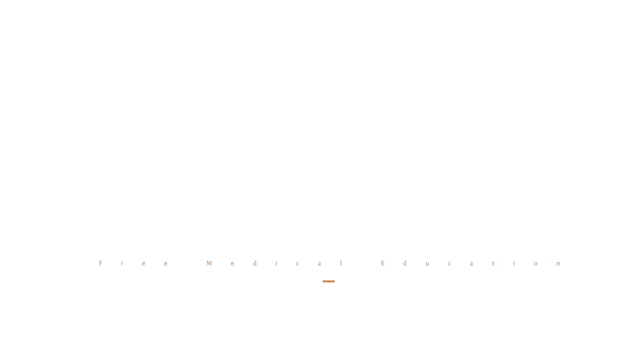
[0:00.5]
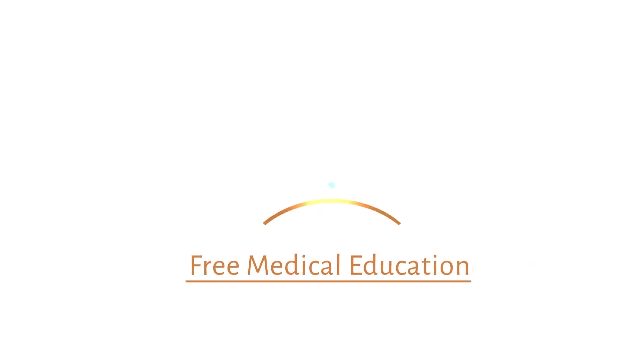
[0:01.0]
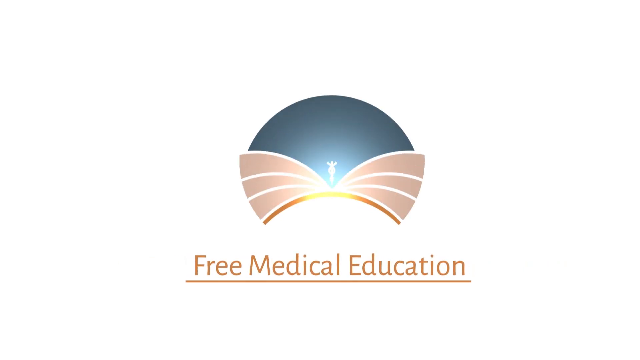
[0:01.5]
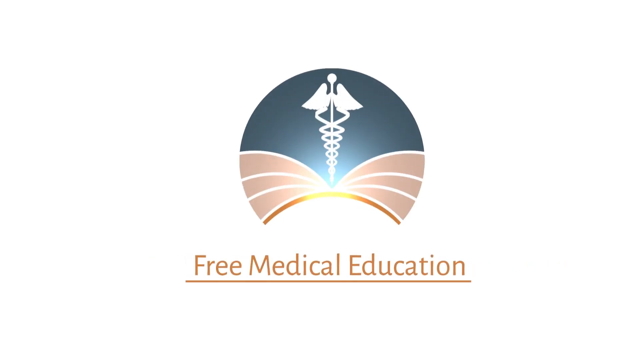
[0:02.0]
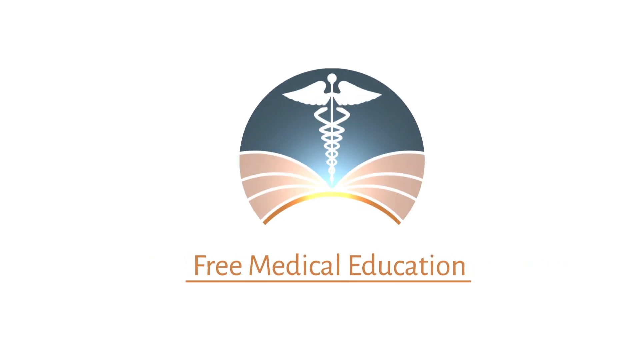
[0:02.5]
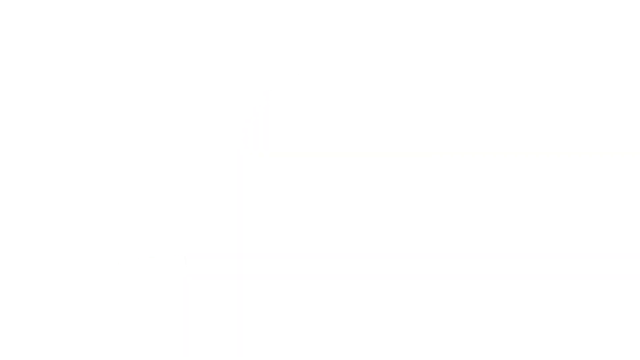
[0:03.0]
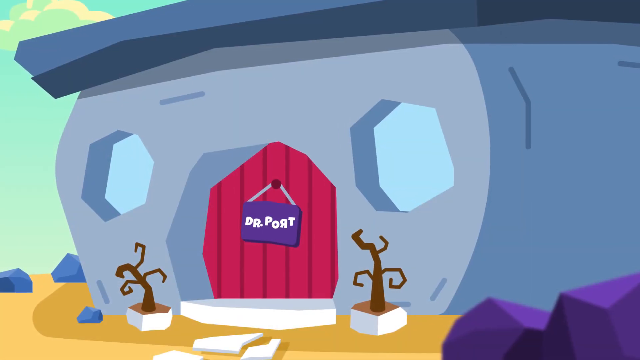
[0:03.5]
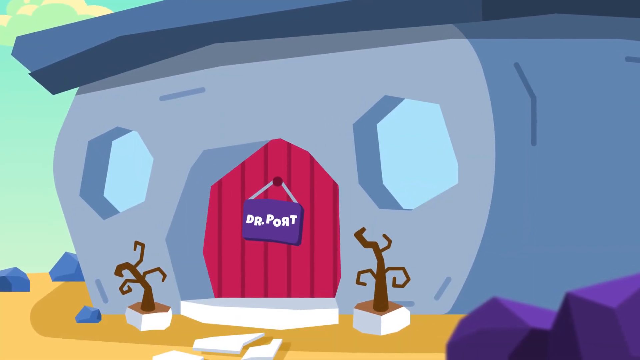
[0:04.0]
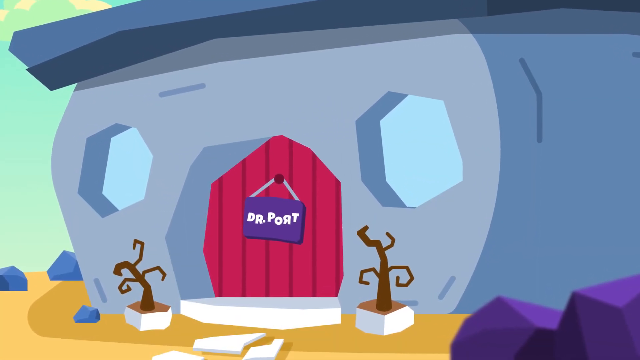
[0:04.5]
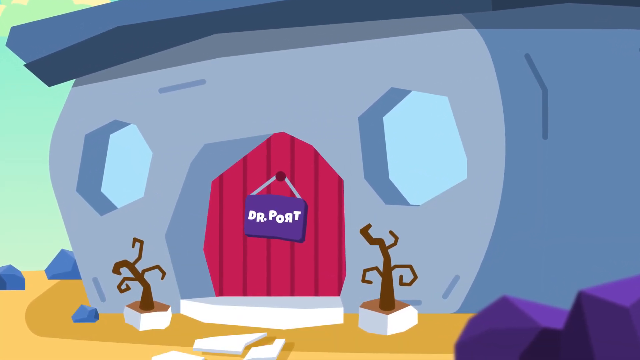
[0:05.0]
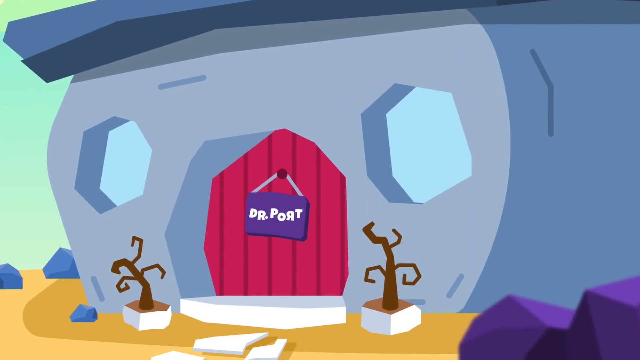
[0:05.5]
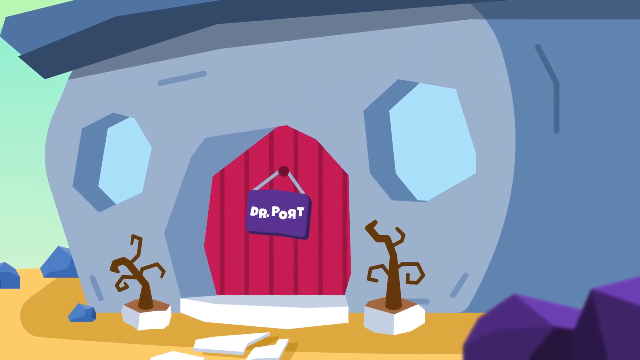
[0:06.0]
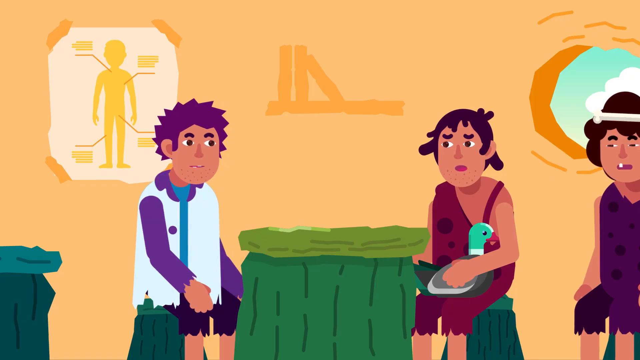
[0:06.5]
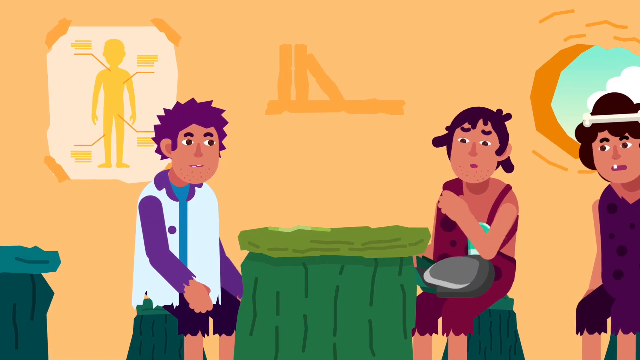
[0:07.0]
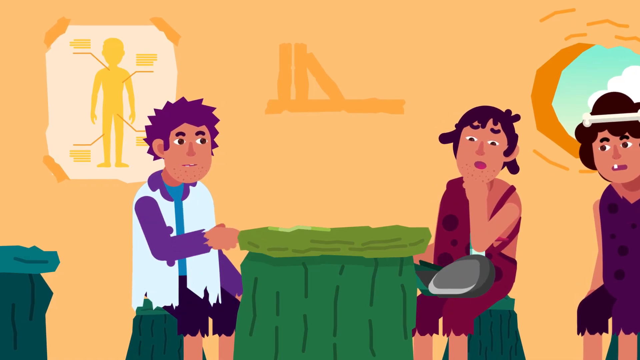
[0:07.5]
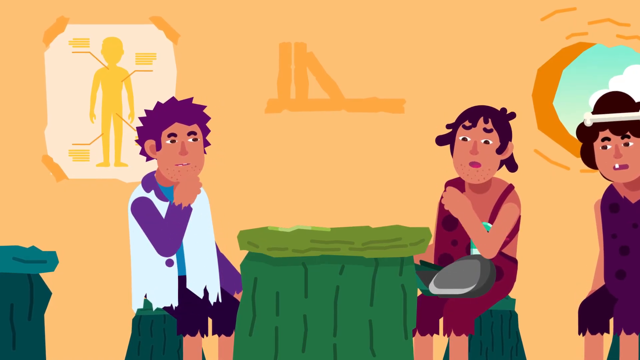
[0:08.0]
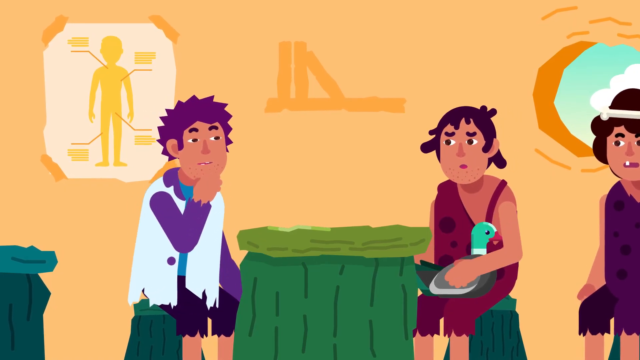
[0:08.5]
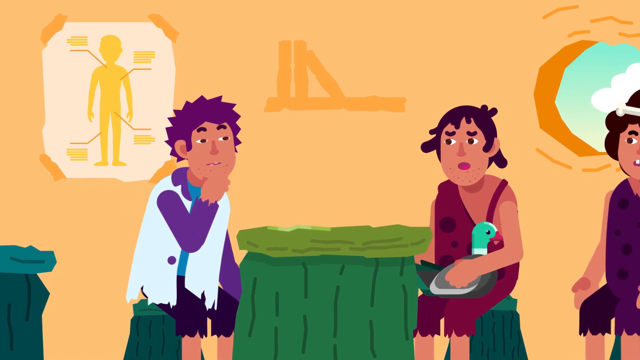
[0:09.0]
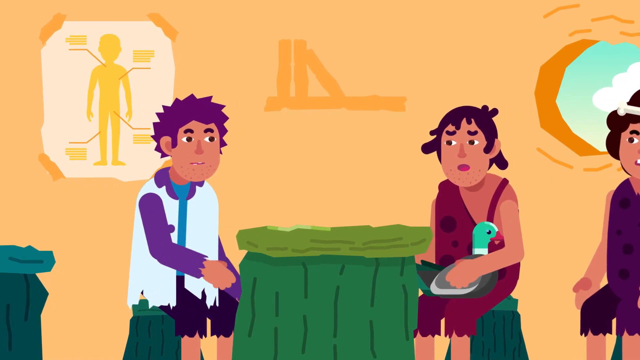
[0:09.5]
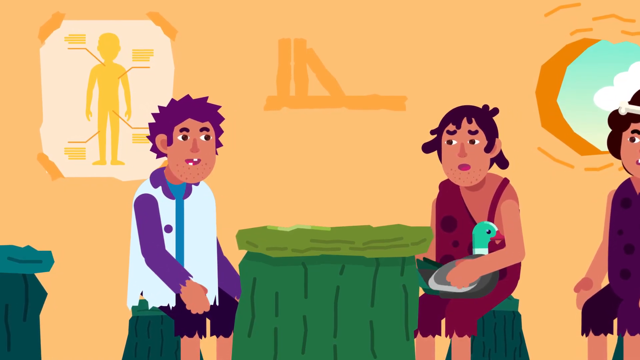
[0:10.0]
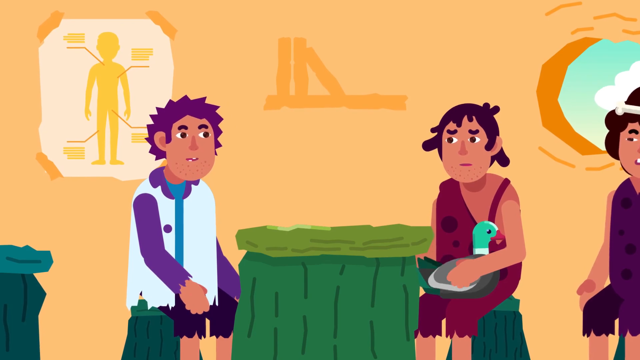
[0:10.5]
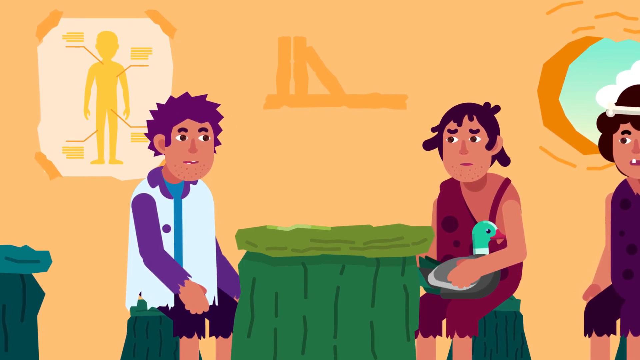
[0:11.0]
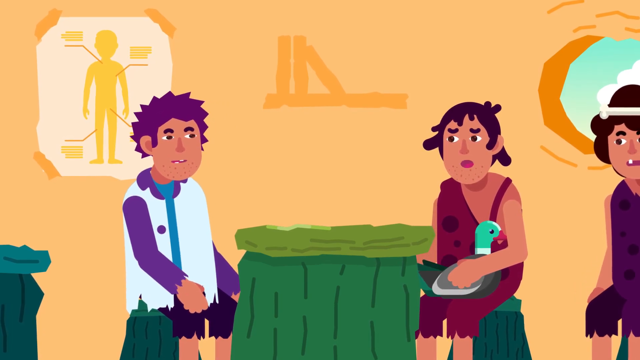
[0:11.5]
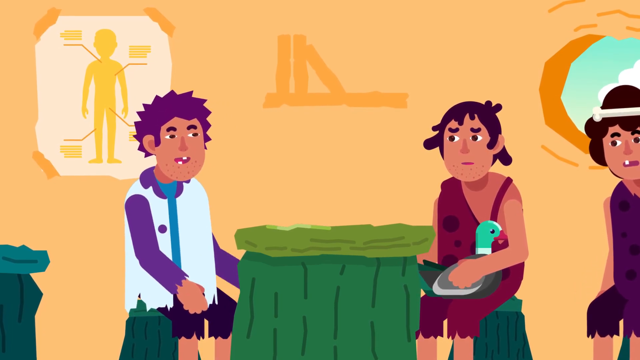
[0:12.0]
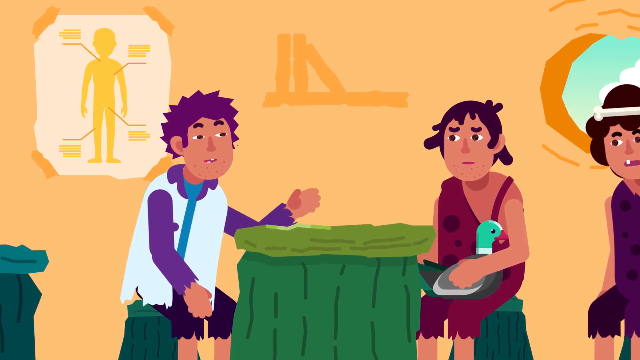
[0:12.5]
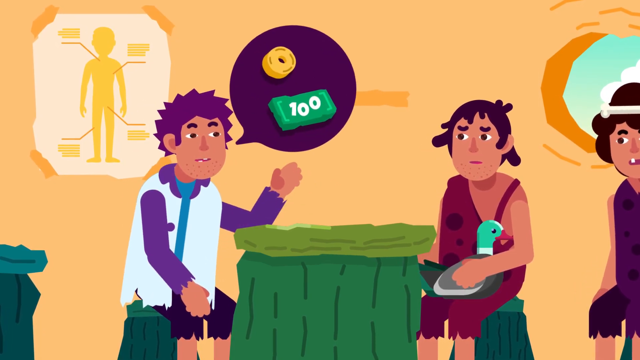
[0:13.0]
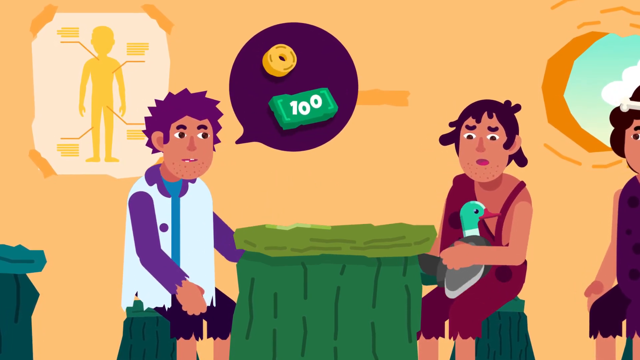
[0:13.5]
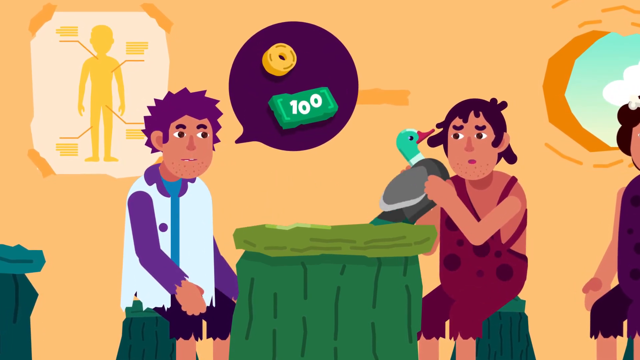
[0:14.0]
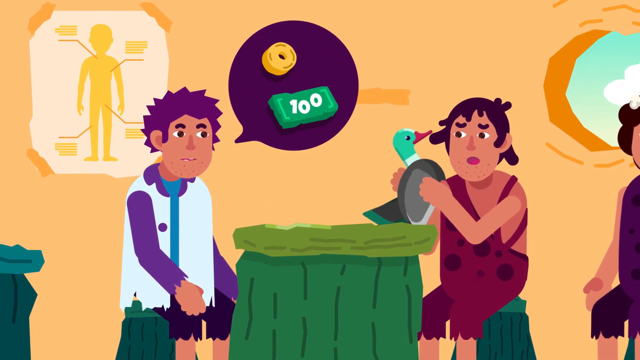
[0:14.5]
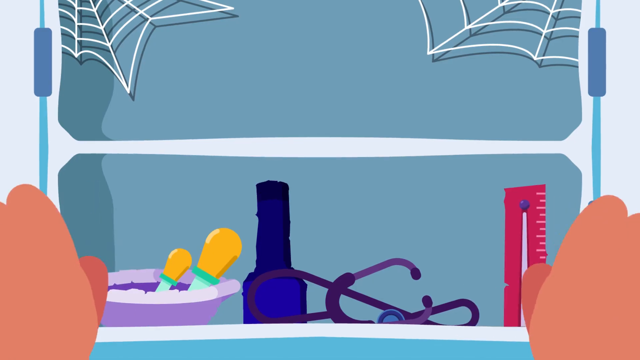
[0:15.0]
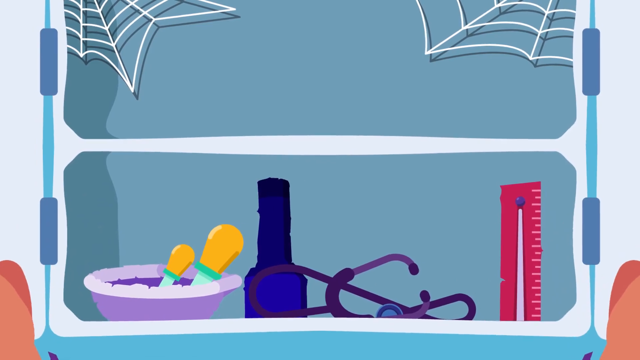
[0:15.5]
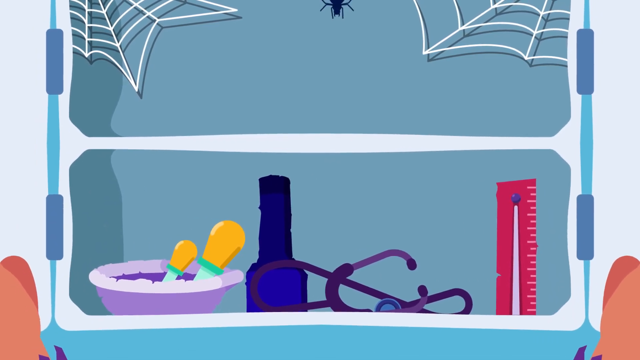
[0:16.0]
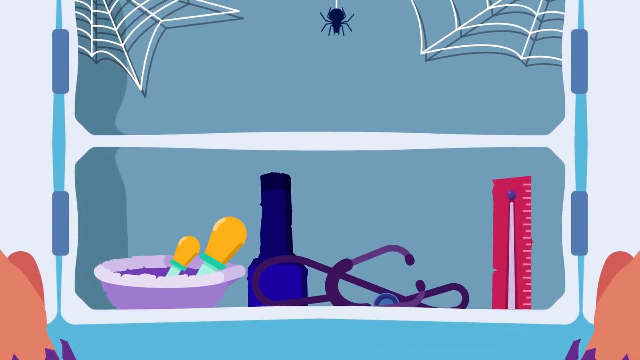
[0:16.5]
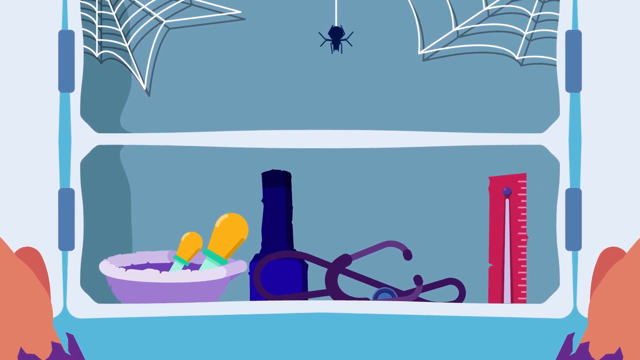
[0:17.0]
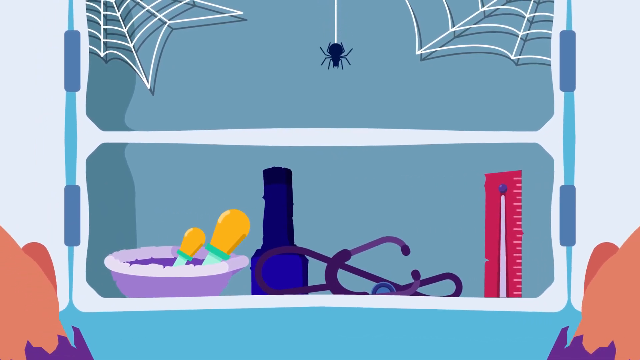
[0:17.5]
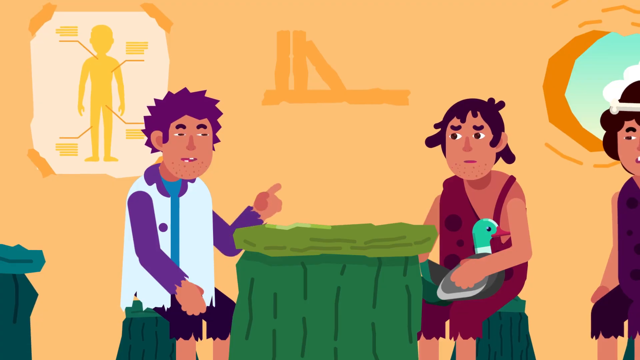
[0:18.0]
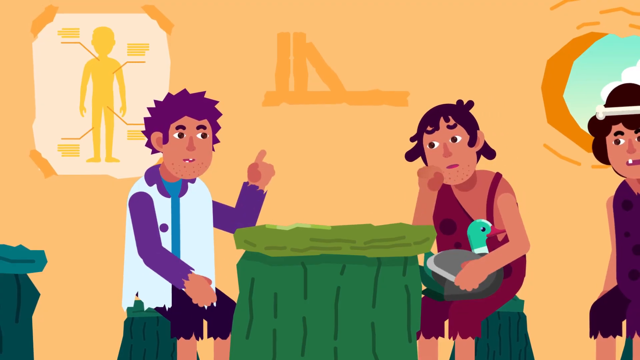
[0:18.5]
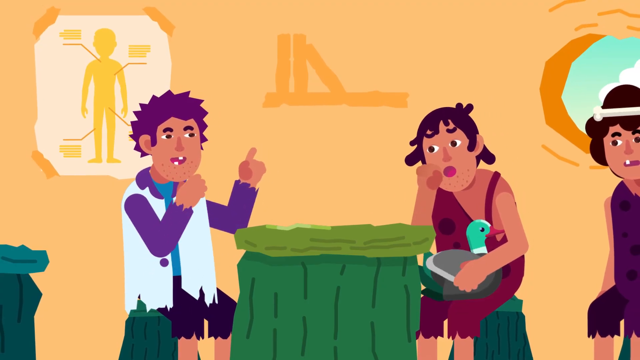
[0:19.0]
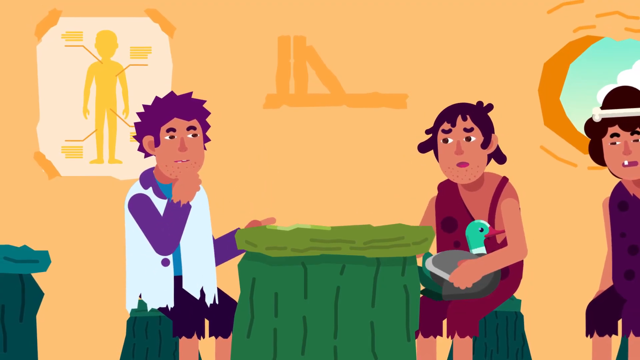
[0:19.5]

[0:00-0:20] The video opens with an animation of a medical symbol in a semicircle. Underneath it, underlined brown text reads "Free Medical Education." An animation then shows a house that looks to be made of rock, with a bright red door on the front and a sign that says "Dr. Port." Three people are then seen waiting in a doctor's waiting room. One is holding what looks to be a duck. The other patient appears to be offering money for the bird, and the person looks surprised. A short shot shows a spider crawling down what looks to be a medicine cabinet or a set of drawers. In the background of the waiting room is a small picture of the human body with information around it, and there is a small window on the right side of the room.